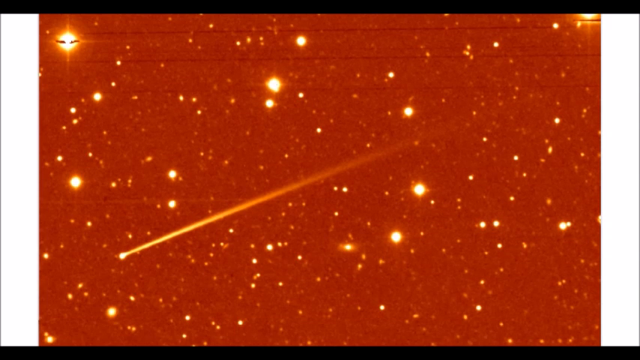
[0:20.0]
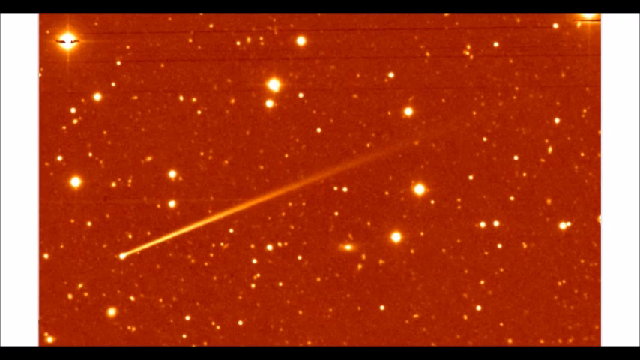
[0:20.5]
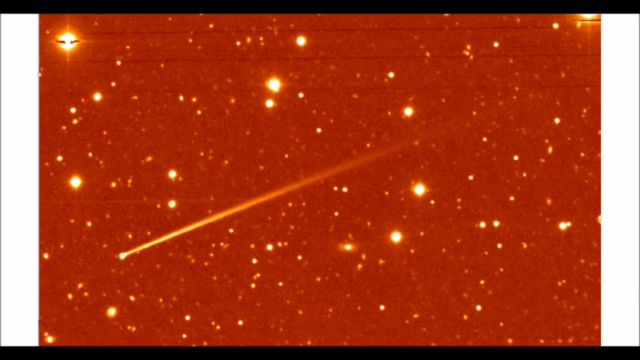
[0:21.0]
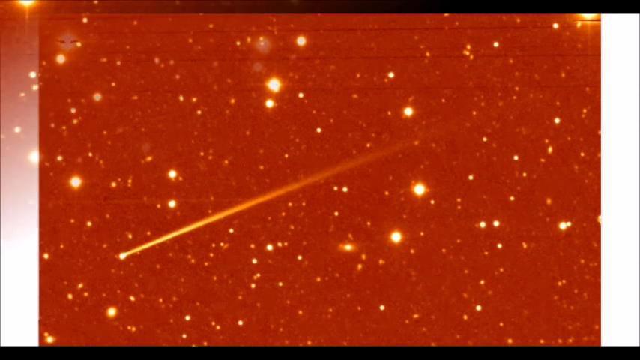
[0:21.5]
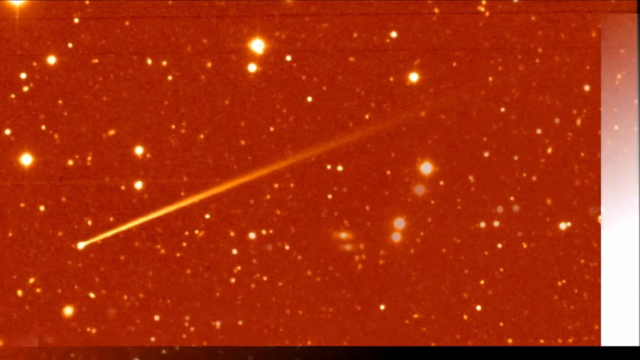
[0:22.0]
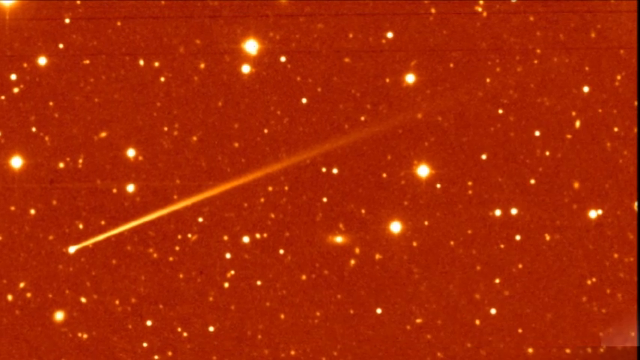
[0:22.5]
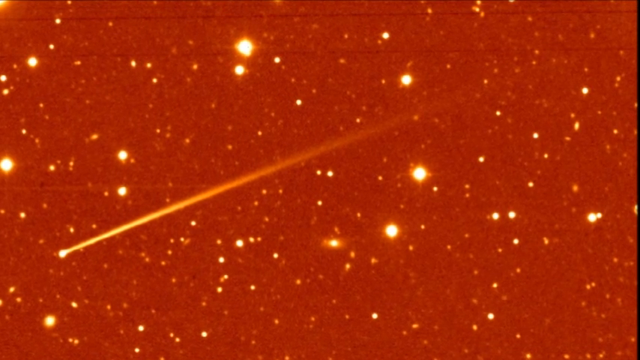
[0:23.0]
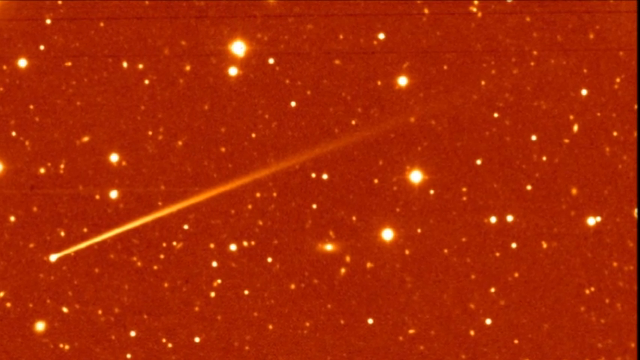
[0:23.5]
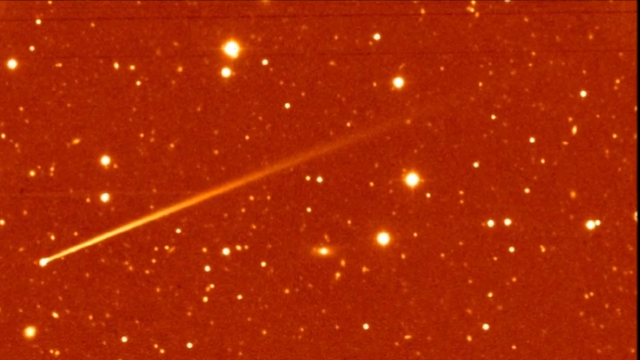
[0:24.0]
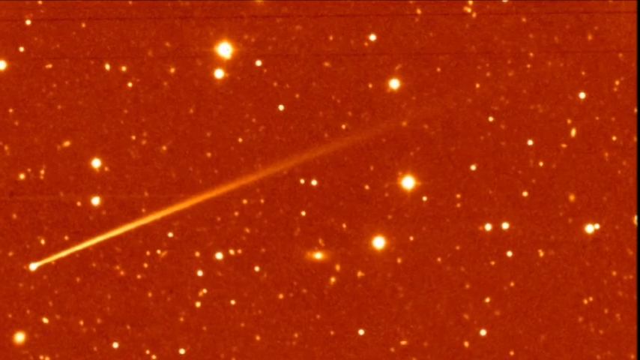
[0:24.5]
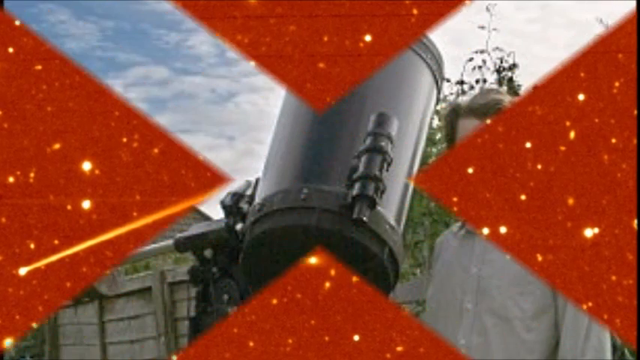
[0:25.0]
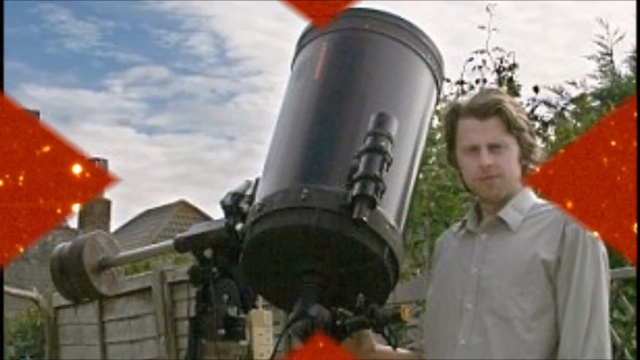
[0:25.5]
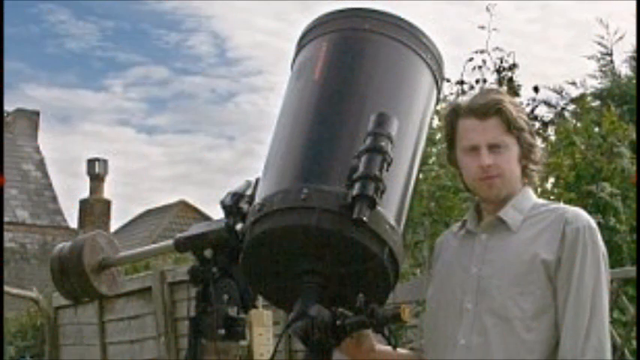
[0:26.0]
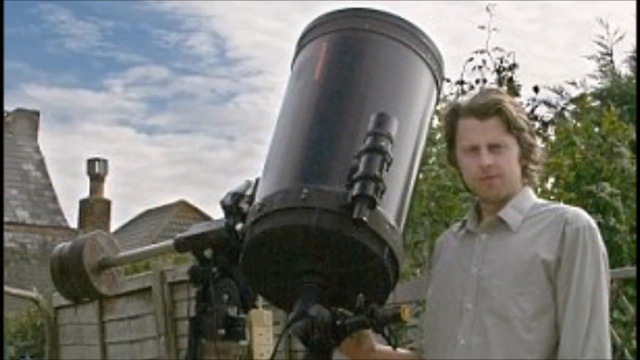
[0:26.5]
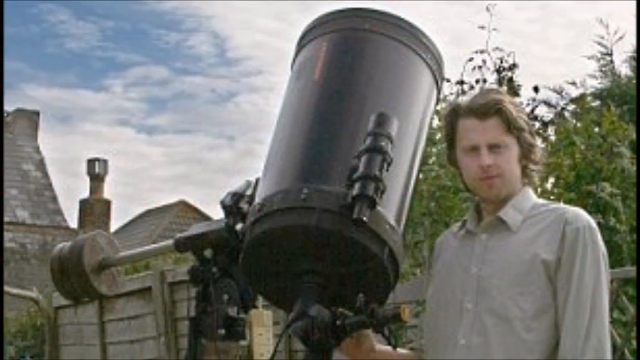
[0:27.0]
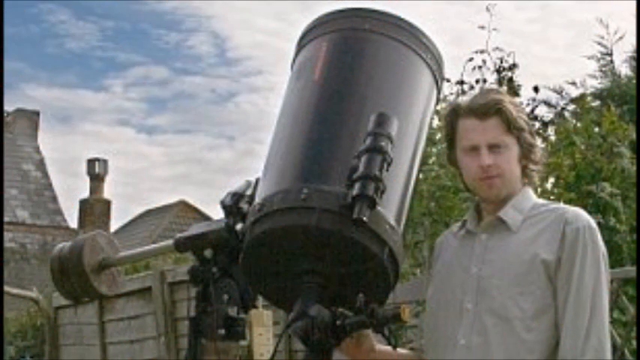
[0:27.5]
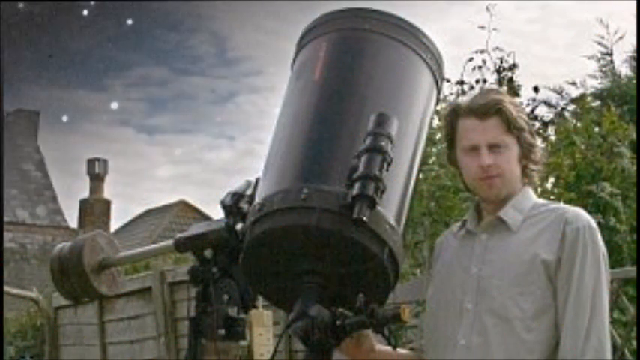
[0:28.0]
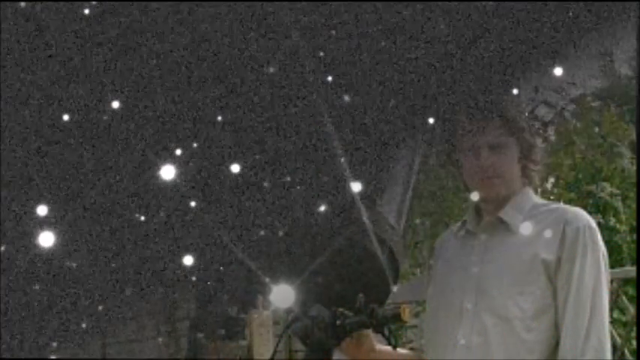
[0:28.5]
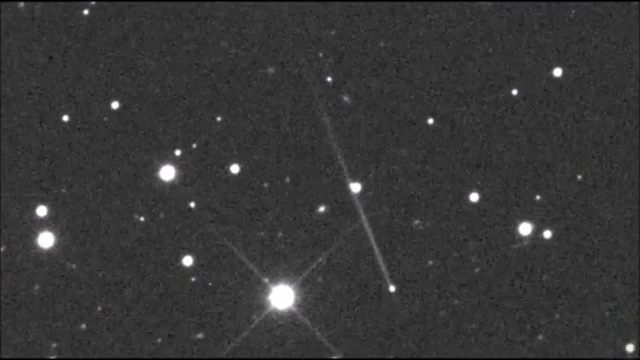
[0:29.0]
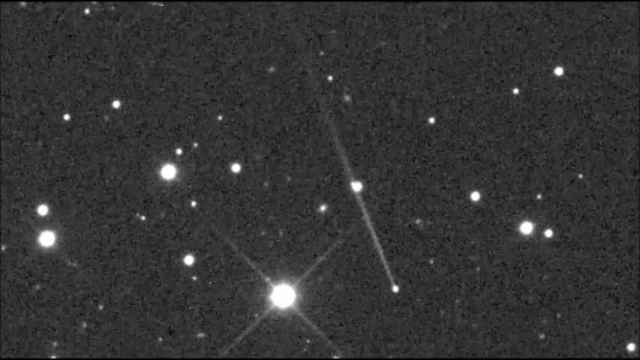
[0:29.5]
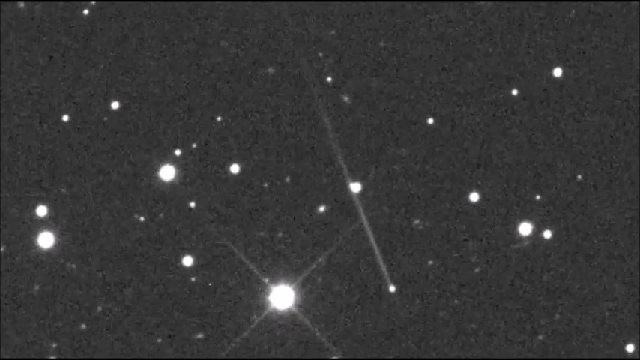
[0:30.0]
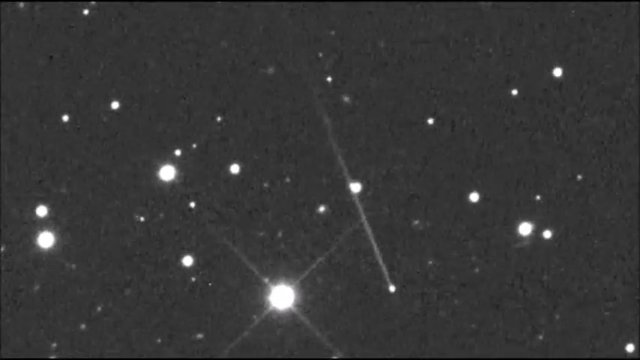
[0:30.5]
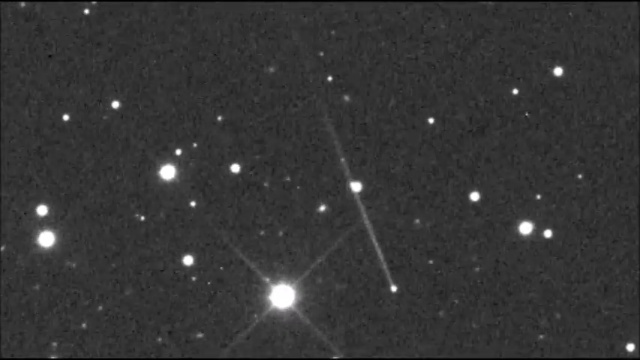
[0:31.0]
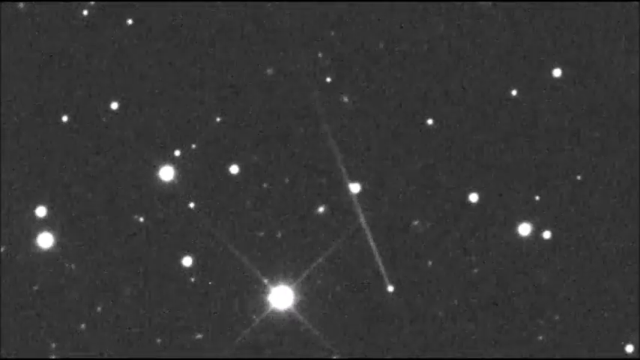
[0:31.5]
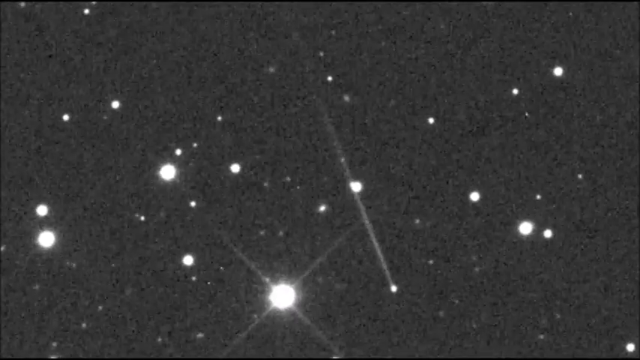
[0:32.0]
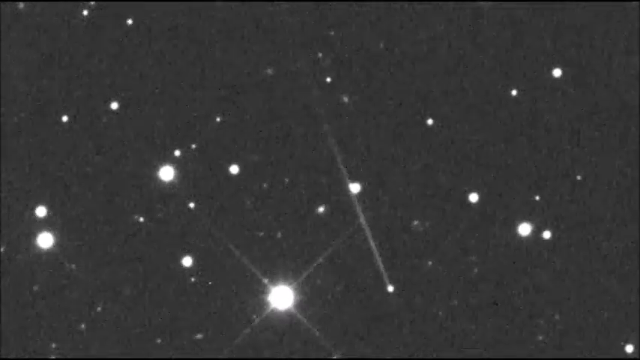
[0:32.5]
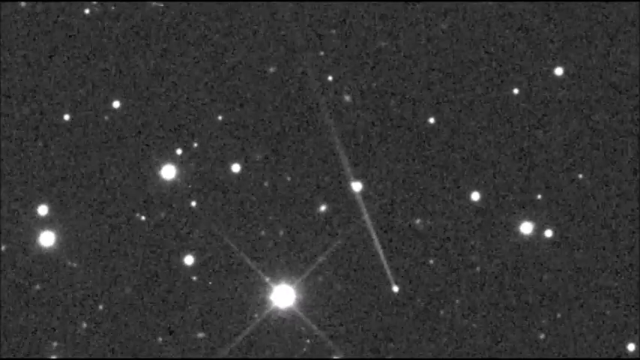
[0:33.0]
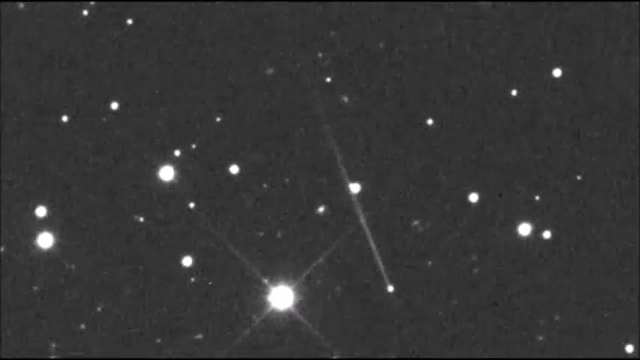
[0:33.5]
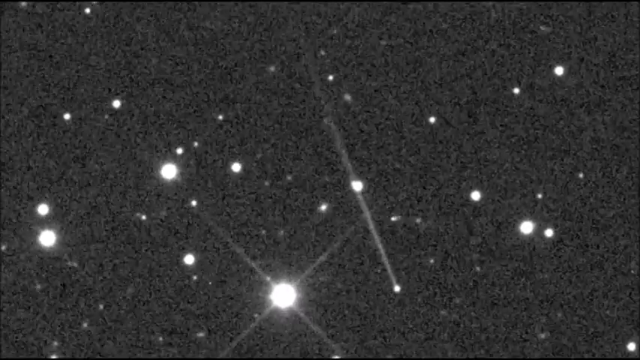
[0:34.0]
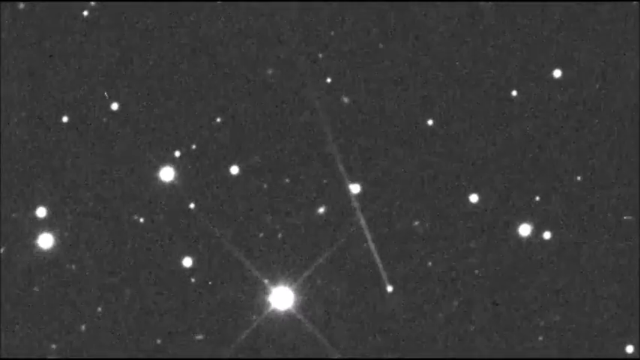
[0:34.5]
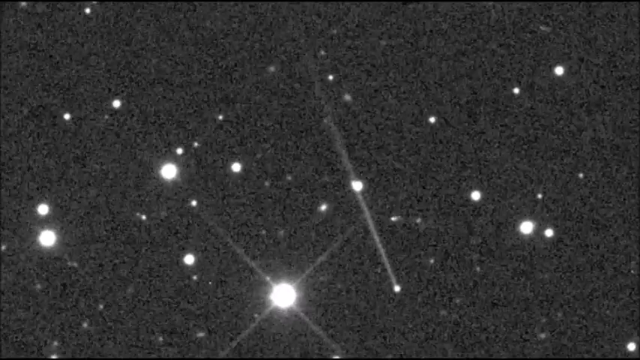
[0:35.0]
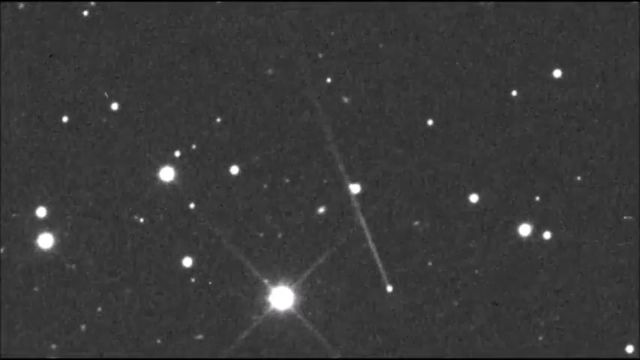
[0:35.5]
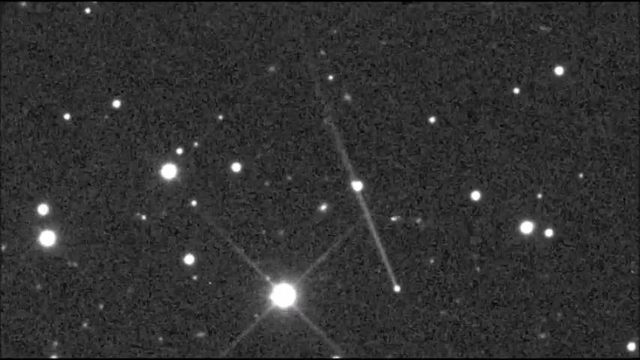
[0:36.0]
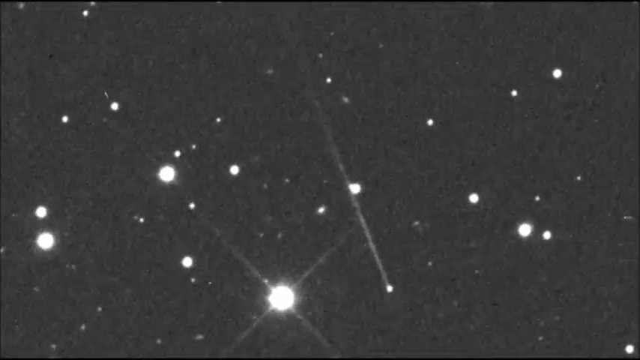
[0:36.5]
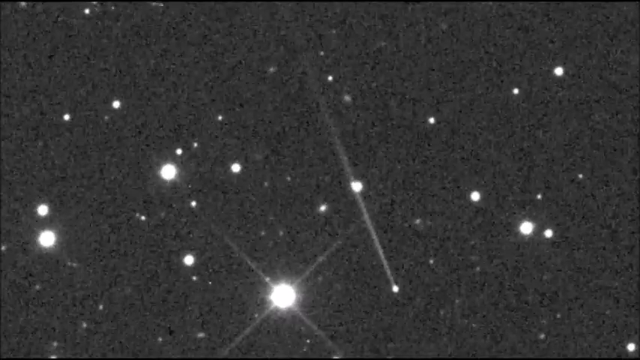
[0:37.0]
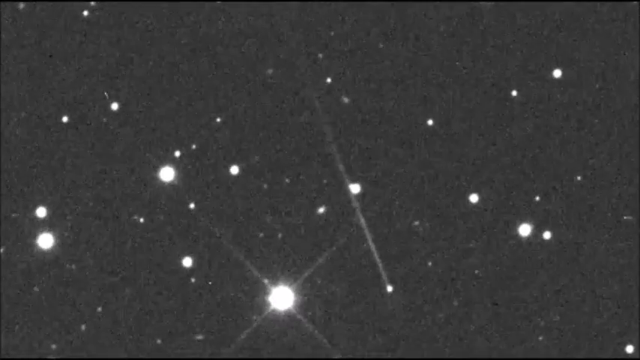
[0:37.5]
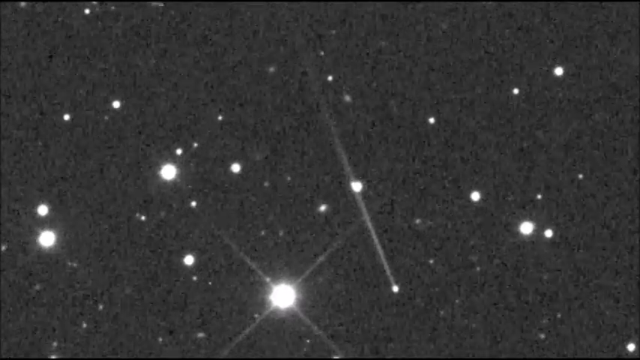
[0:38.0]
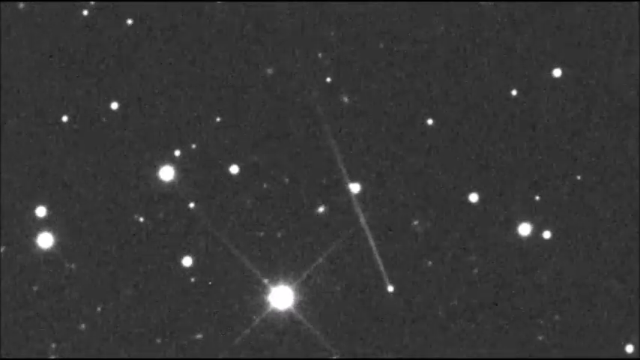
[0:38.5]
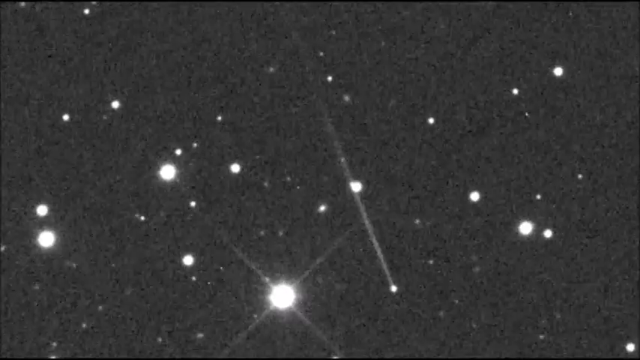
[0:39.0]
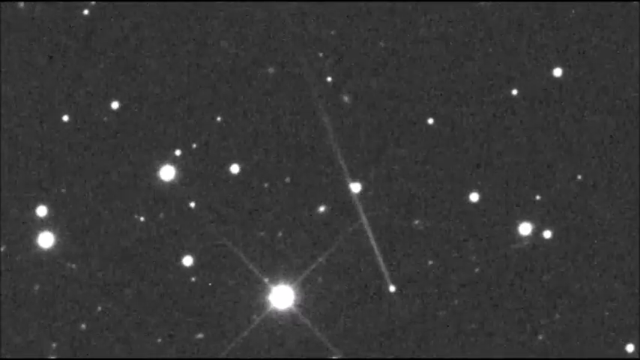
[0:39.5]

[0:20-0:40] A white border runs down the left and right sides, with a red night-sky background between them and yellow lights scattered throughout as stars. An asteroid angles from the center down to the left. The view zooms in a little closer until the tip of the asteroid is almost in the bottom left corner, with its tail going up to the right, and the view zooms slightly up to the right. An X swipe opens out to a man in front of a telescope. He is on the right side, with shaggy blonde hair down to just past his ear and a white button-up shirt, with trees behind him and a very cloudy sky. To his left is a huge telescope with a smaller telescope on its side, and buildings are further to the left. It is a still shot. A white transition from the top left corner leads to an all-black background with small circles of bright light across the screen like stars. At the bottom, just right of center, a small light moves very slightly left and right as the screen seems to pulse, and each time the screen pulses it becomes somewhat fuzzy.